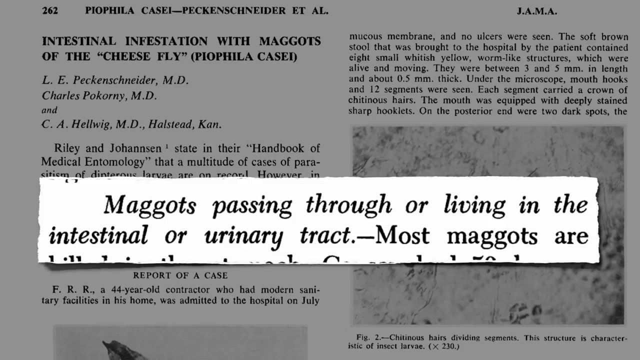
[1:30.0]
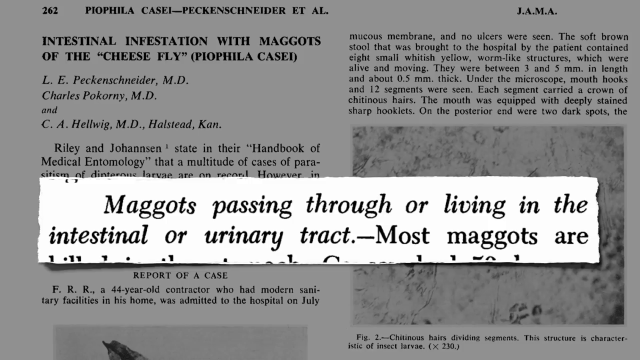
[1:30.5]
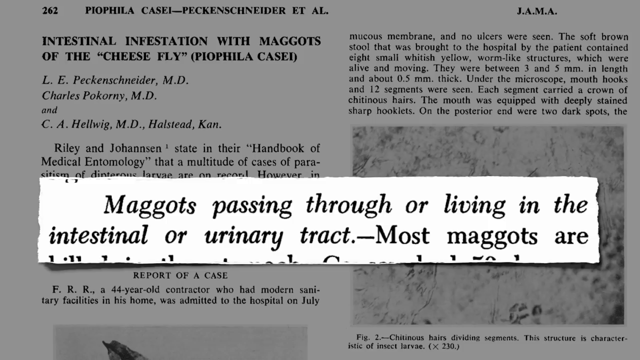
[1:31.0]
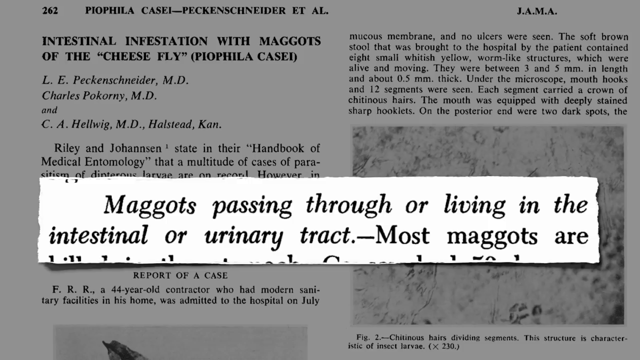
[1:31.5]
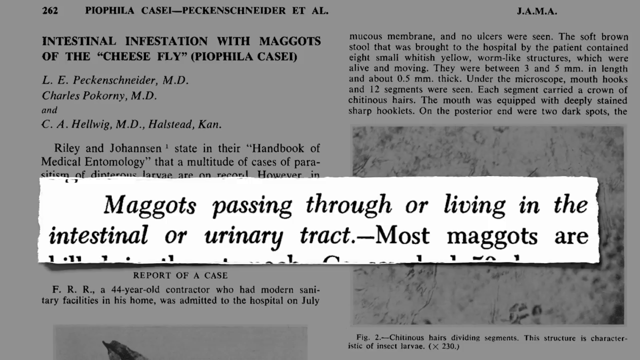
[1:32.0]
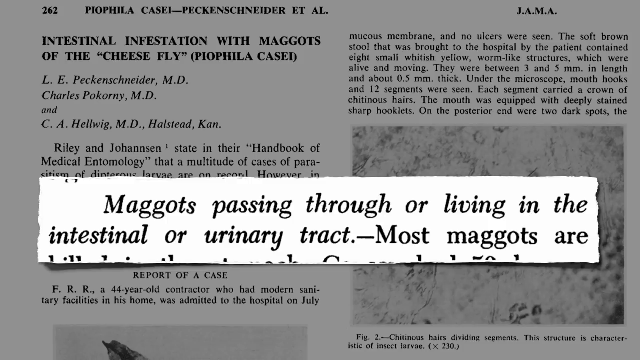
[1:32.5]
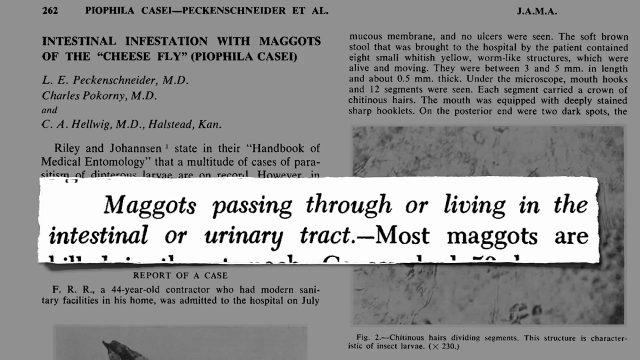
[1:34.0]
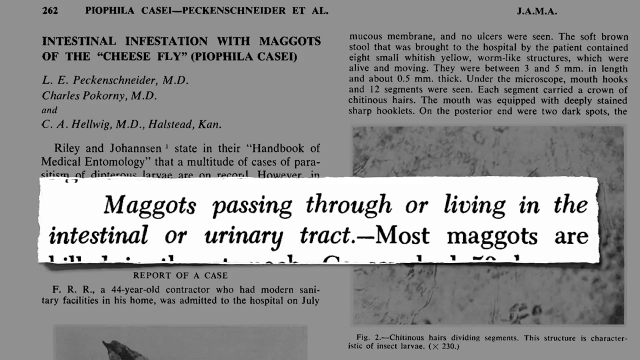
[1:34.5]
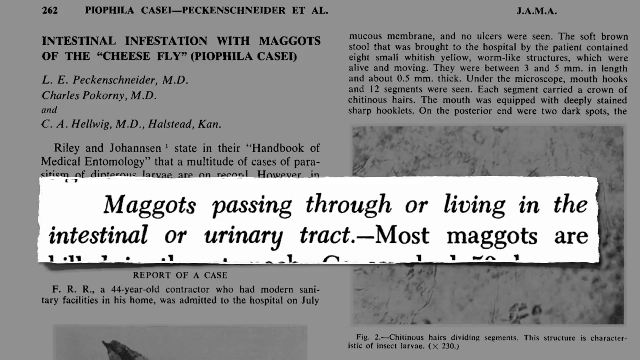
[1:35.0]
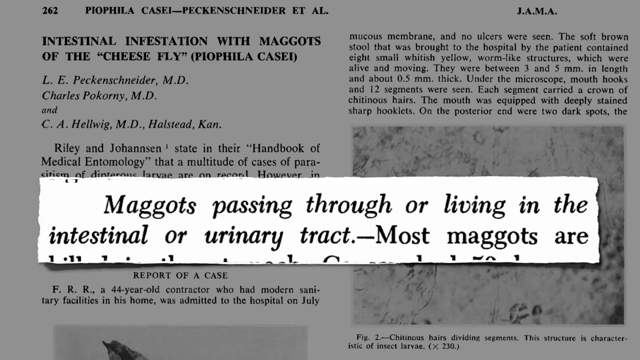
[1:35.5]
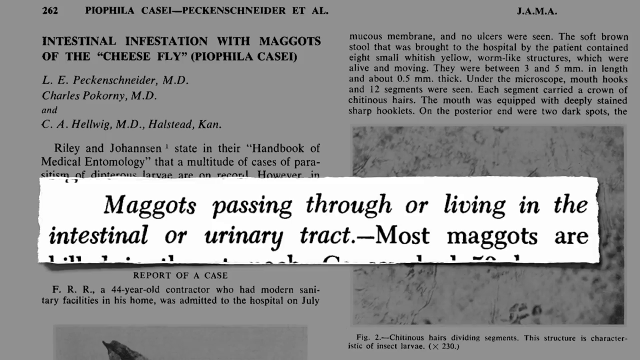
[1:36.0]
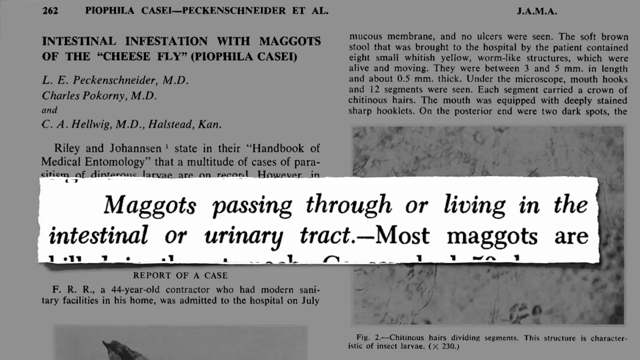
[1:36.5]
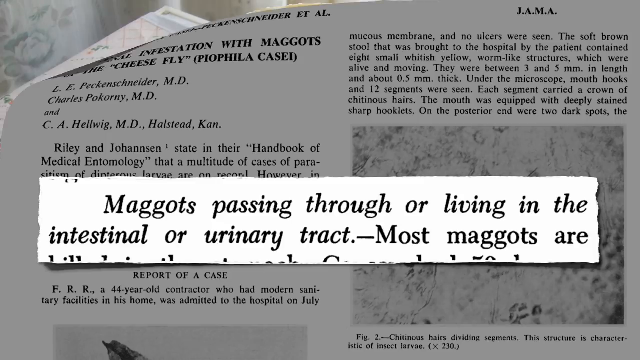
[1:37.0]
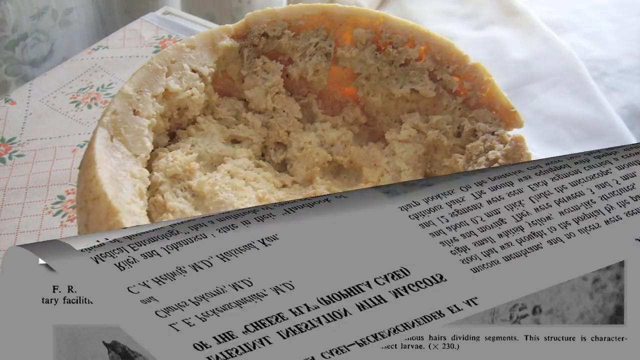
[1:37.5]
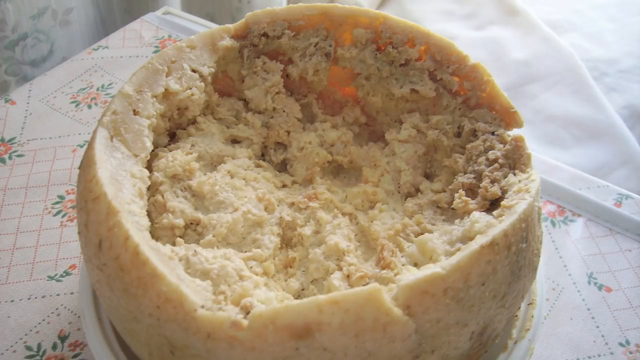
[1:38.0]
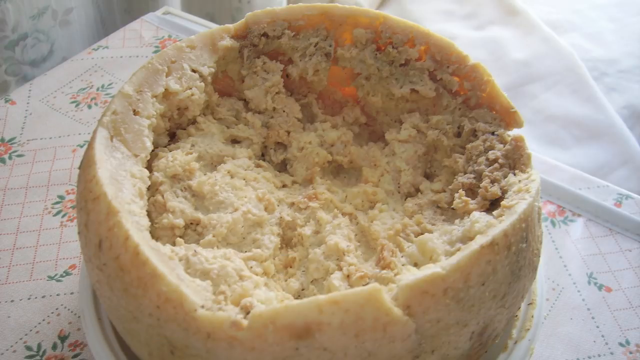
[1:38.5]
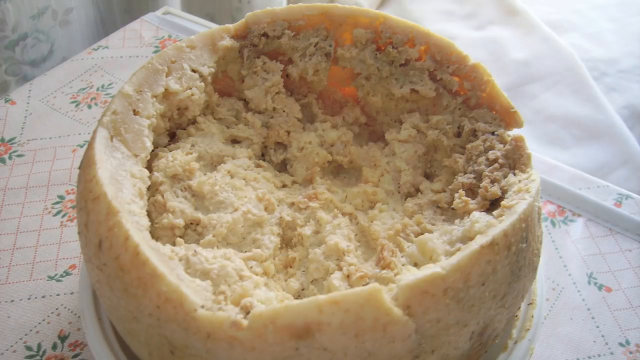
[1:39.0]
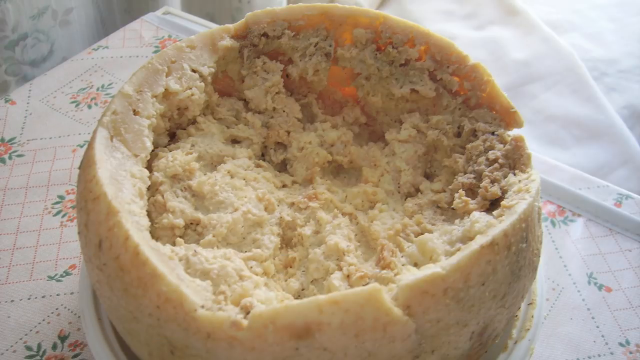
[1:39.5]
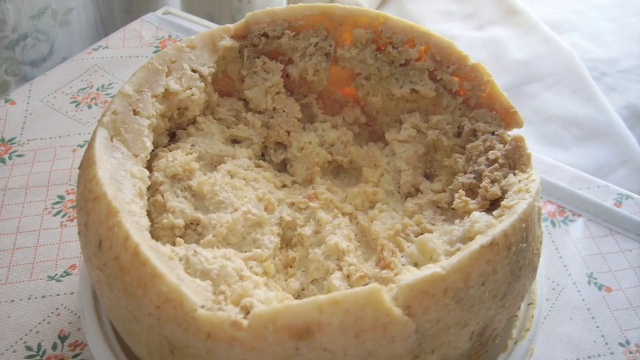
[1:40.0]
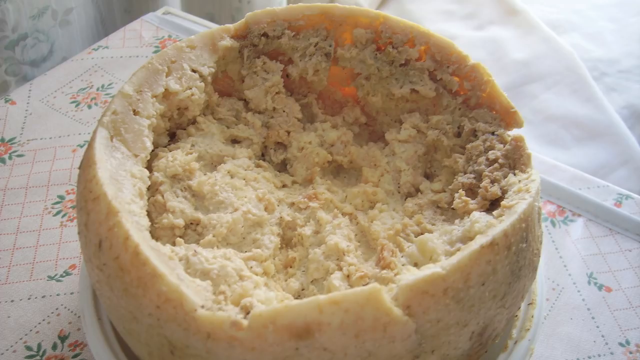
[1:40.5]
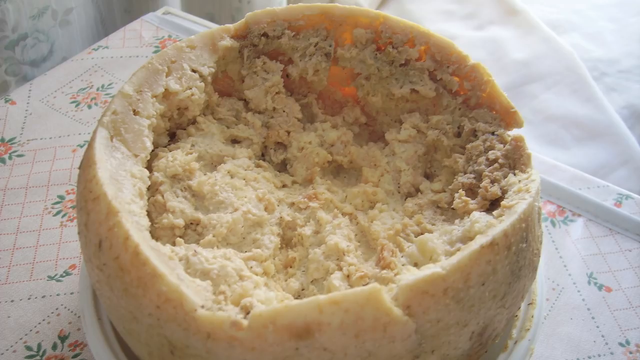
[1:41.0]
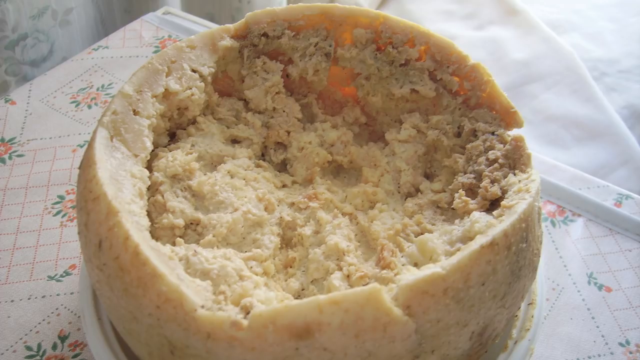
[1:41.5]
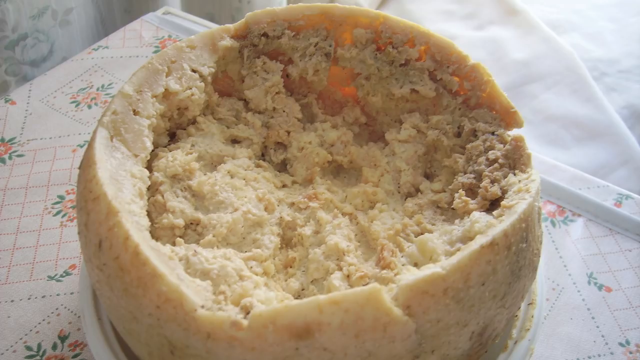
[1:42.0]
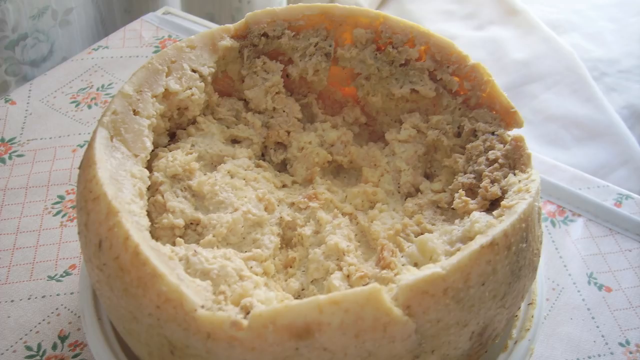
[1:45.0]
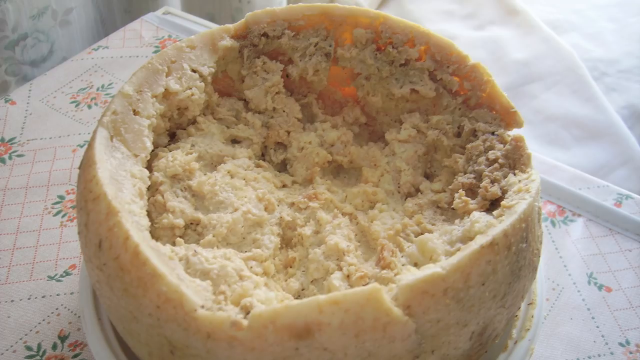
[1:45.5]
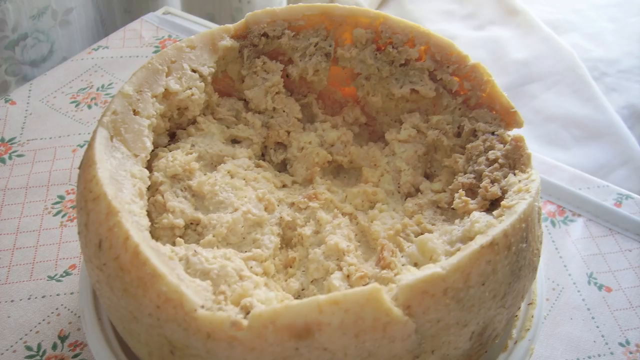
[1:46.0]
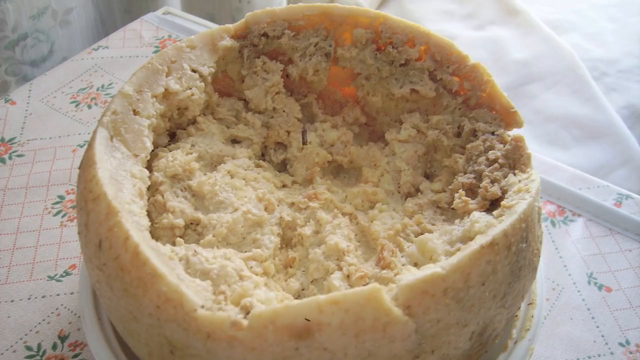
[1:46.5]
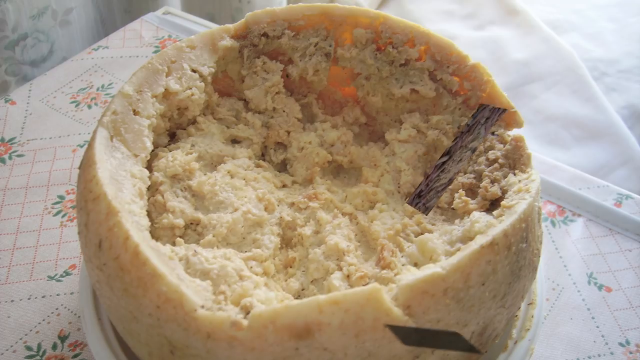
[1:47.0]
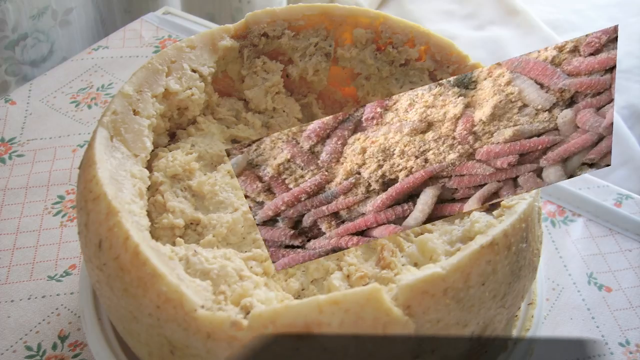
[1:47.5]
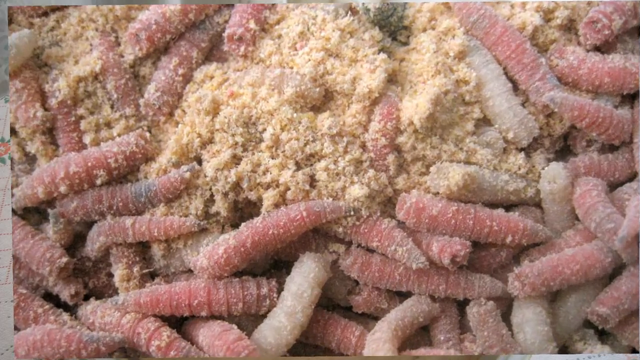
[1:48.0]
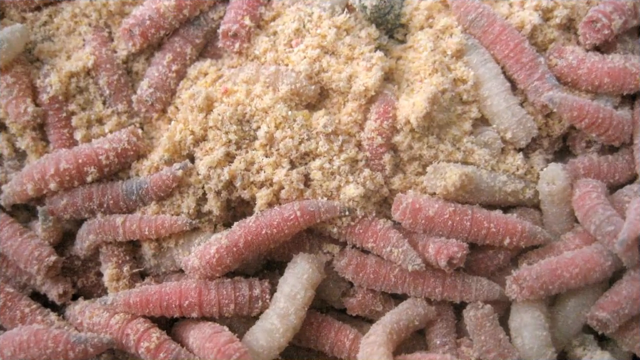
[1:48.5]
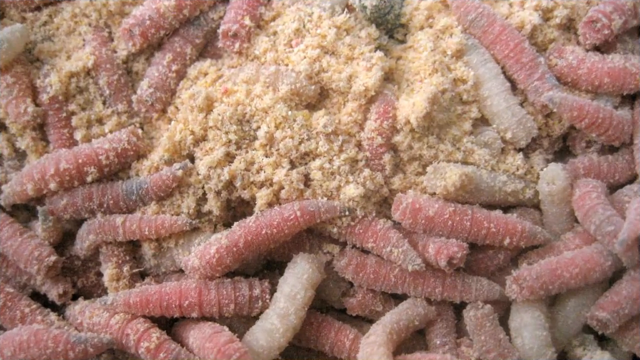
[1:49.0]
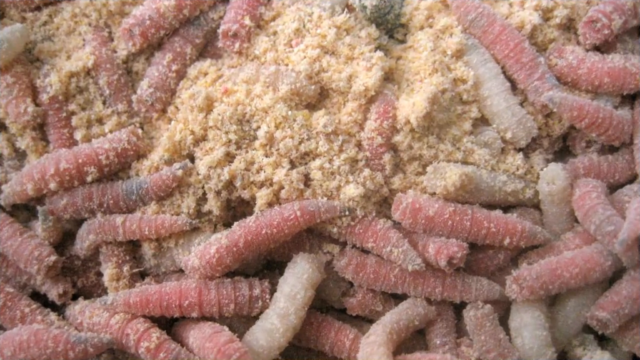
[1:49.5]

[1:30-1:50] The article about intestinal infestation with maggots from cheese flies flips away. A wheel of cheese with its center partially carved out is shown on a white piece of fabric with flower patterns throughout; the flowers look somewhat simplistic and seem to be roses with green leaves. There is also a red grid on top of the white cloth. The cheese inside the wheel looks crumbly and somewhat soft. The next image shows the outside of a wheel of cheese, covered in a sawdust-like appearance with maggots on it. Some of the maggots are white, but most are red, and in both colors parts of their bodies have a black piece inside.